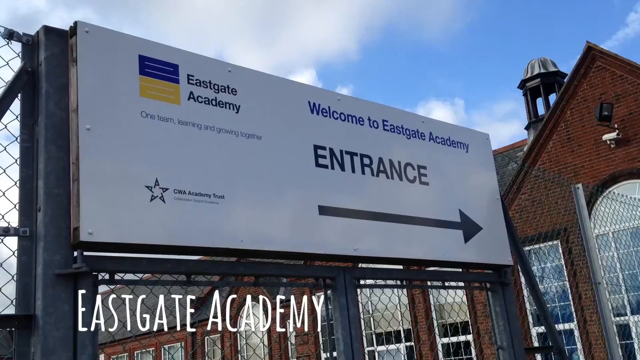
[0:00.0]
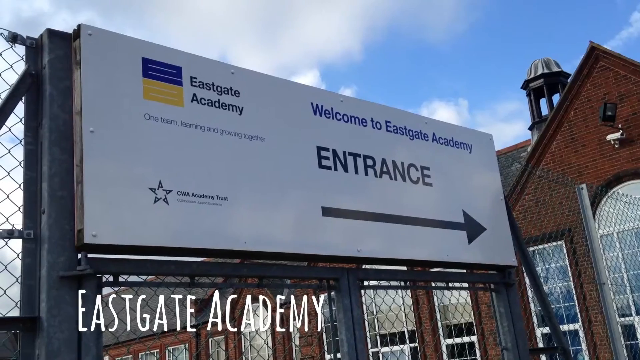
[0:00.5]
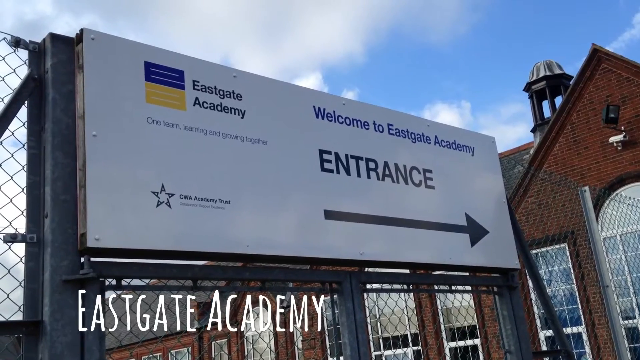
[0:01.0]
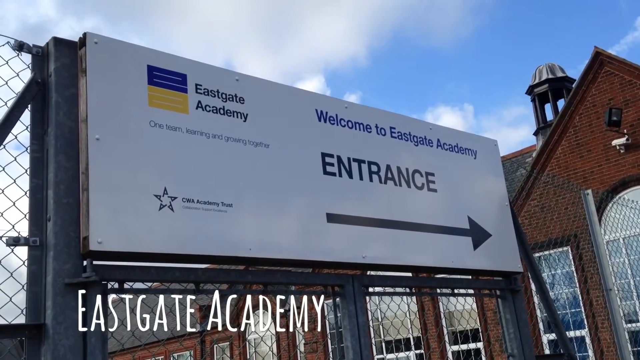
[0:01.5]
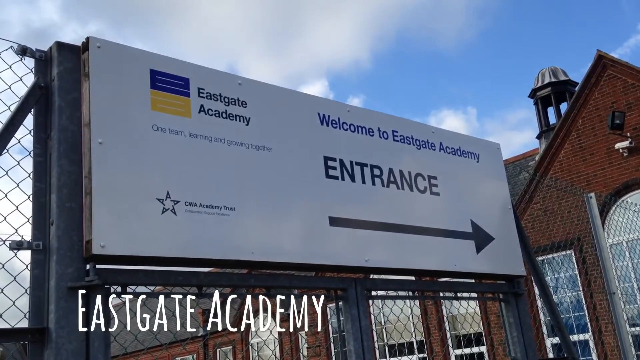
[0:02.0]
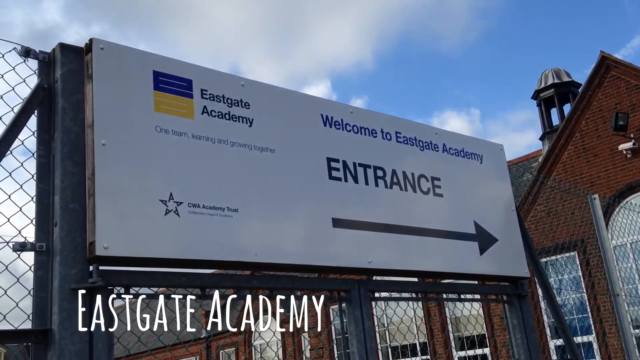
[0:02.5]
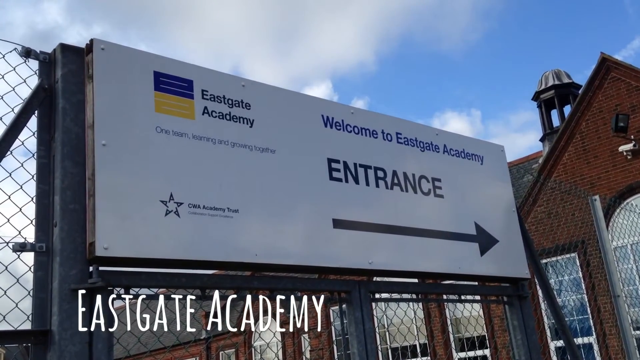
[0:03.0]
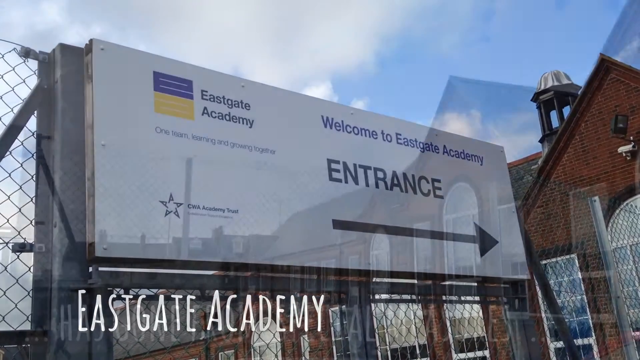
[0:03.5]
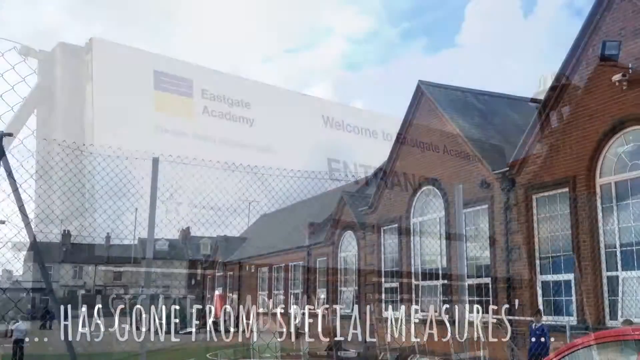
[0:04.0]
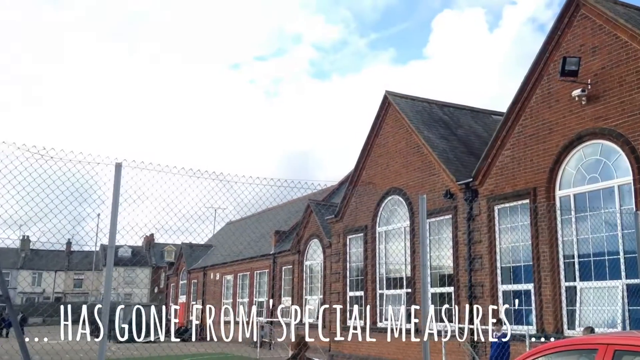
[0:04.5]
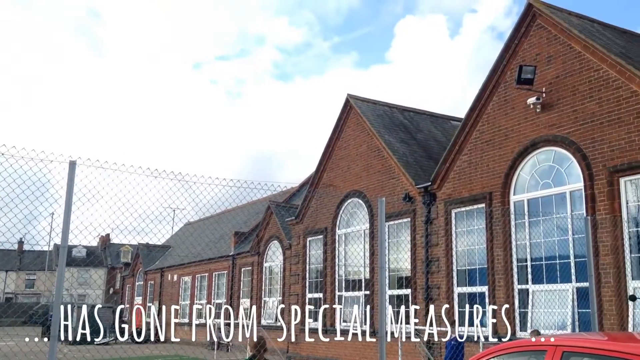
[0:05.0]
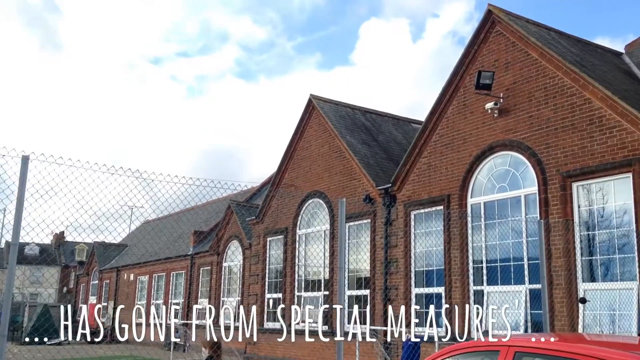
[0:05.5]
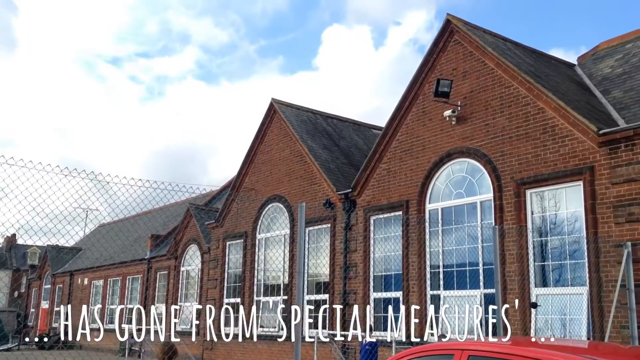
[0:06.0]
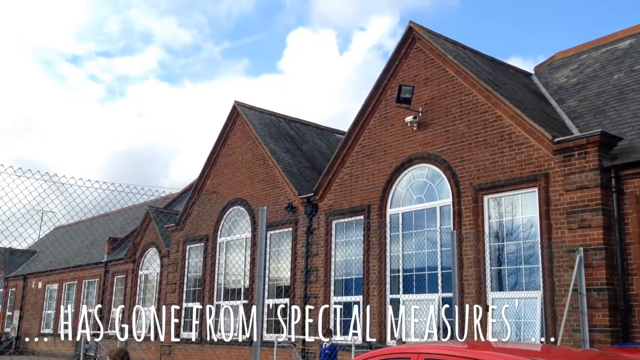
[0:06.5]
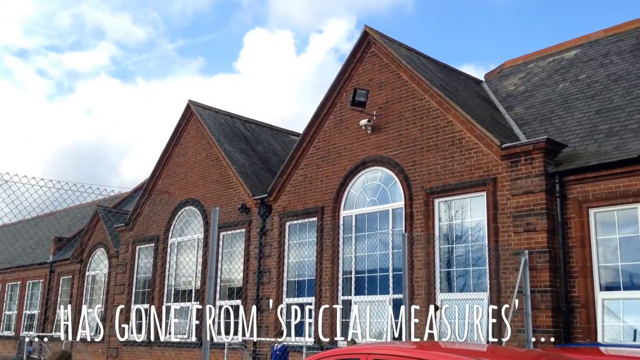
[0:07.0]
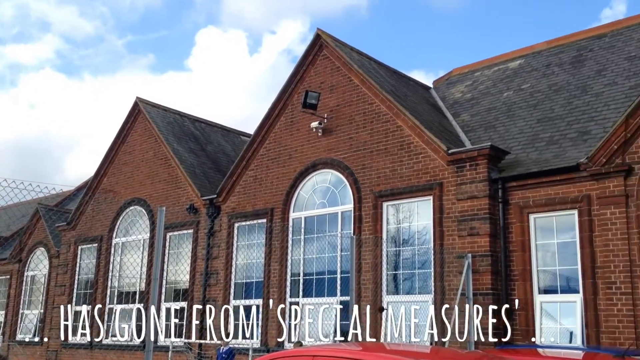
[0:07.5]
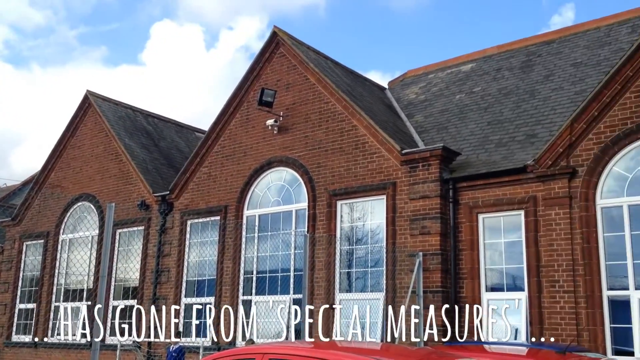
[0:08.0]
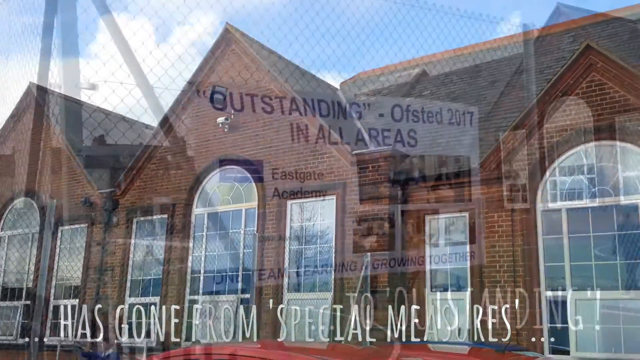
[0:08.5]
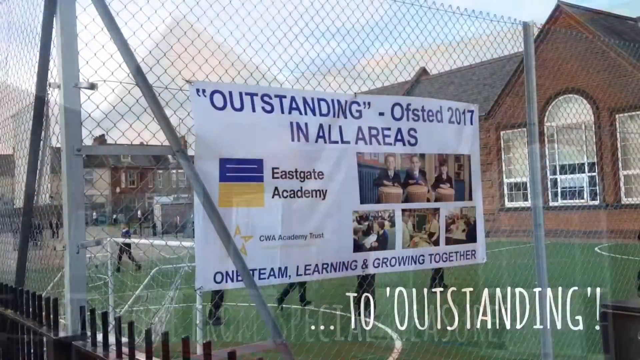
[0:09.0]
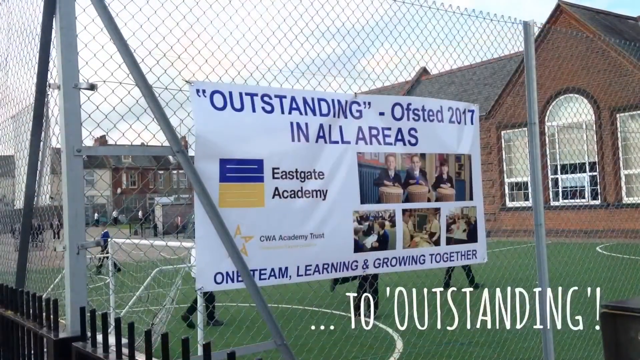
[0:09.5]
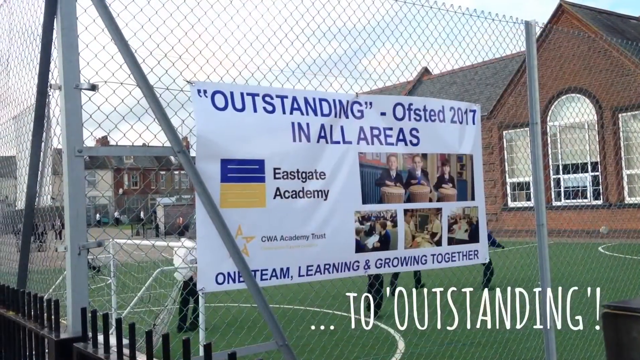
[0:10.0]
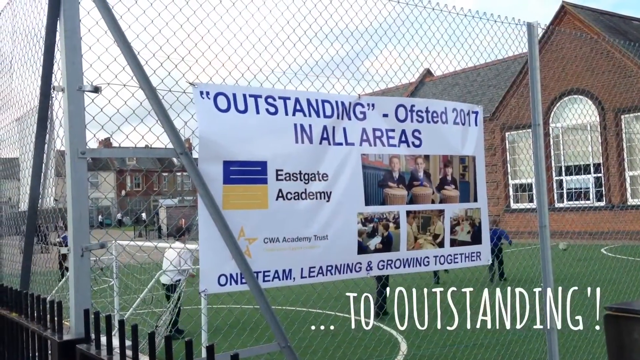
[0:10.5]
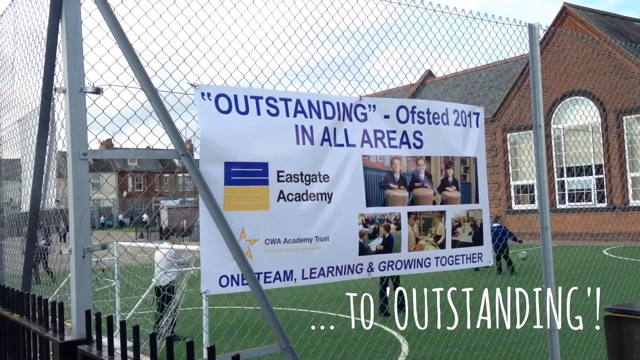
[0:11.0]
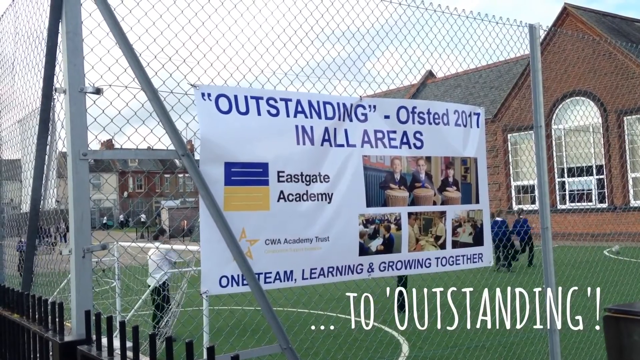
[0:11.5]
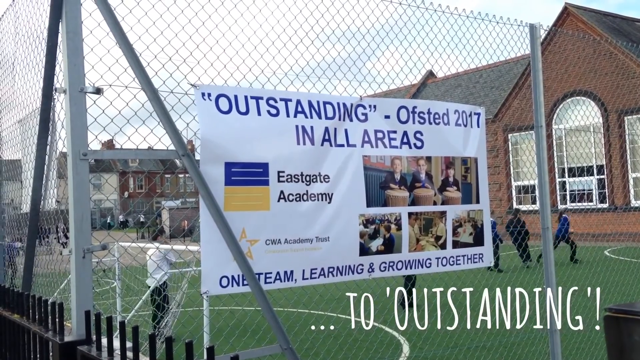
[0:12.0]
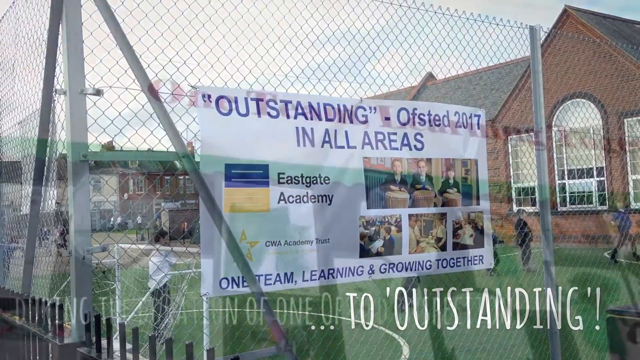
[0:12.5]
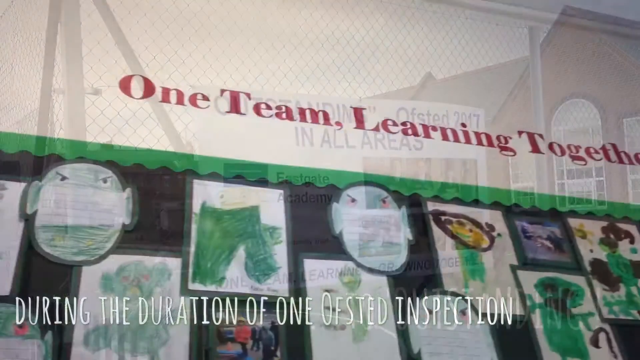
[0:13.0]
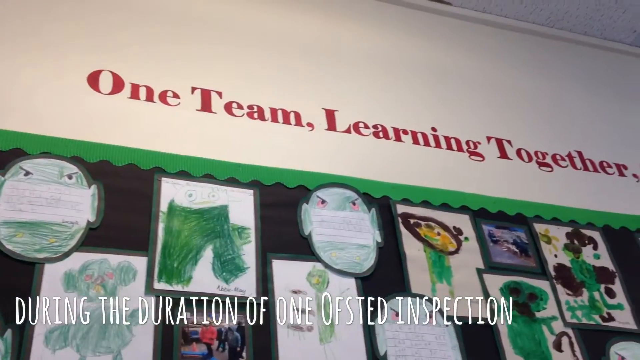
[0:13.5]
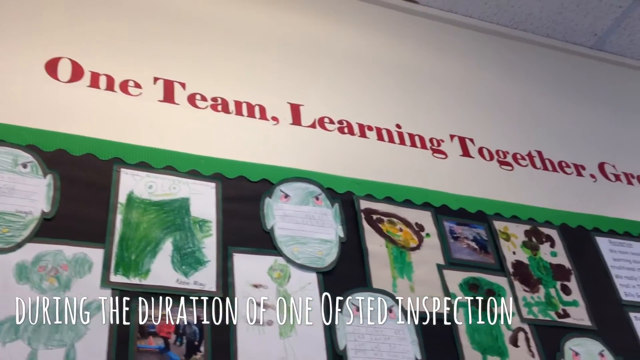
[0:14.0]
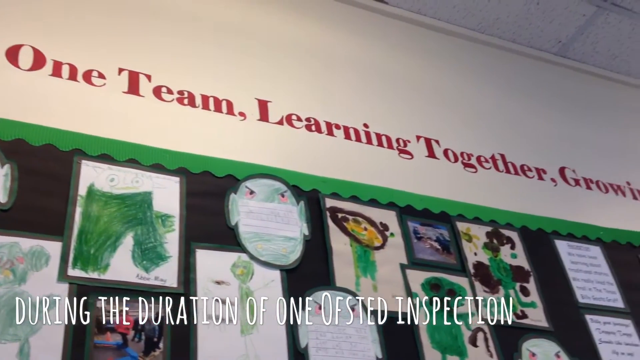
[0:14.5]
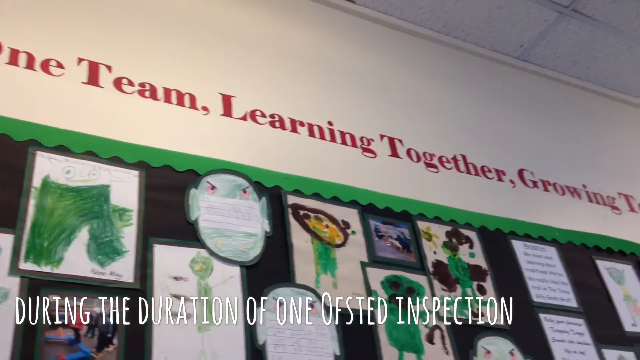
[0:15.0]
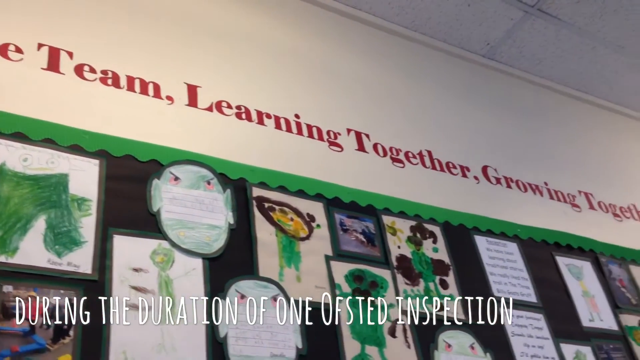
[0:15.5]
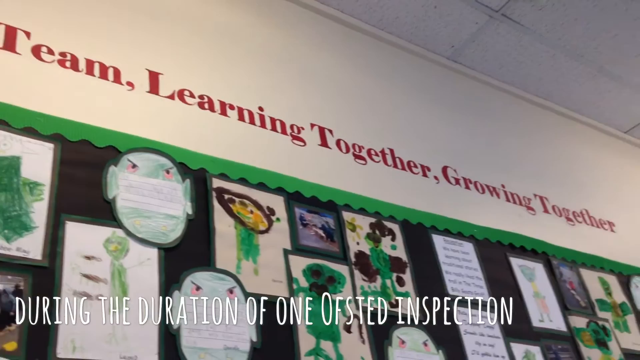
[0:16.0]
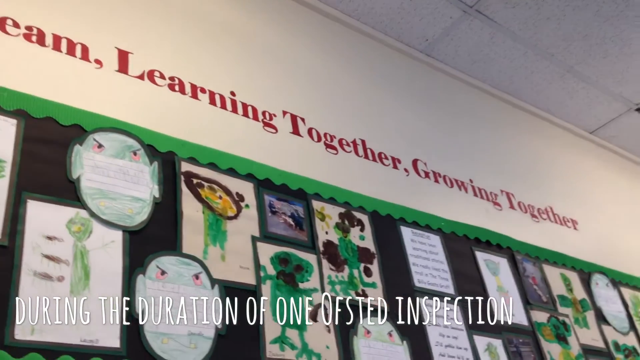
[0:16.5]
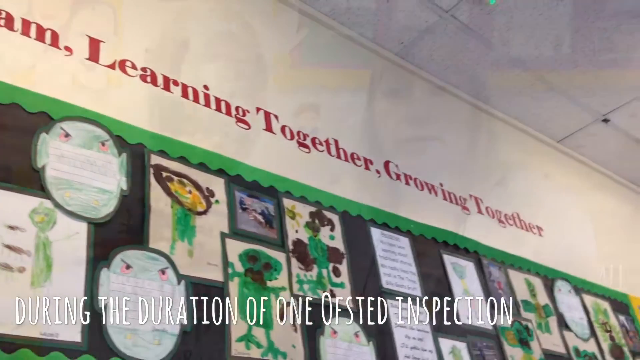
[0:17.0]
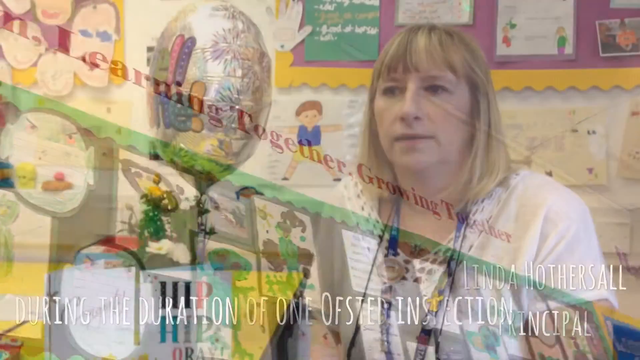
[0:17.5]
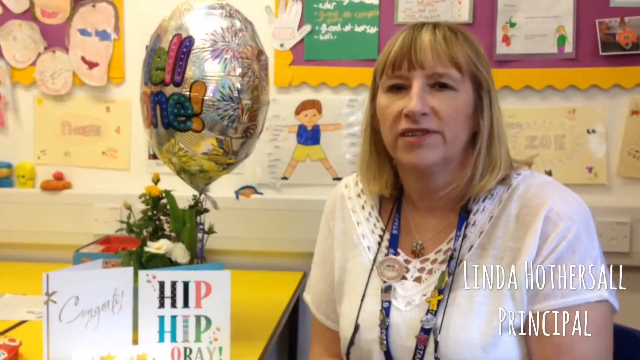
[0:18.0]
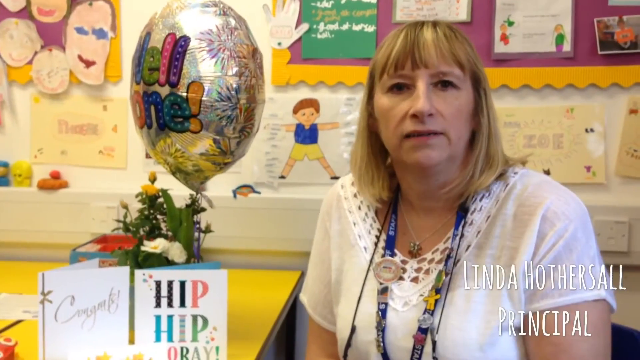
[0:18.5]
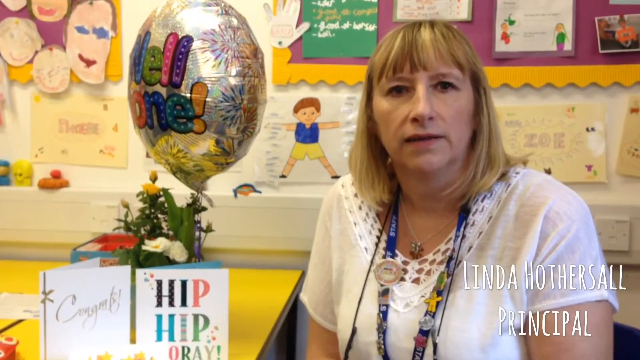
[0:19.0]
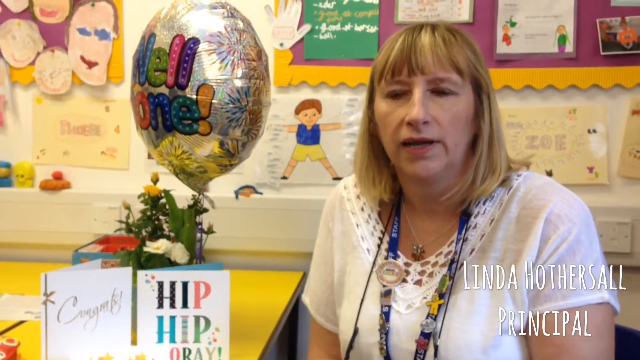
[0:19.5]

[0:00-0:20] The video is about East Gate Academy. Across the top, starting on the right, there is blue sky with light cloud at the bottom, and heavy clouds the rest of the way, barely reaching up the left side. Below that, down the left side, is half of a chain link fence. A big sign has metal poles on the side, a metal fence underneath it, and a big white board in the top left. There is a blue rectangle and a yellow rectangle with lettering in them, with "East Gate Academy" beside them and something written in black underneath. "CWA Academy Trust" is in the bottom left, with a blue star in the top right. The sign reads "Welcome to East Gate Academy", and below that is "entrance" with a big black arrow underneath it. To the right, part of a brick building is visible, with a glass front door window to the side. In the bottom left, text says "East Gate Academy". The camera moves slightly, then cuts to the front of the building with a fence and pans right, showing the brick building. Text says "has gone from special measures to outstanding". Next a fence appears with an East Gate Academy poster; across the top it says "outstanding" and "Ofsted 2017 in all areas", followed by the academy names and pictures of the kids, and "One team learning and growing together" at the bottom. Some kids play outside on a soccer field under a cloudy sky, in front of a brick building. Inside a classroom, the motto "one team learning together, growing together" is shown, and below it is a little board covered with paintings and drawings children have made. White text runs across the bottom. The video then reaches a teacher with blonde hair and a white shirt, frilly around the neck and plunging down a little, wearing a blue laminate.